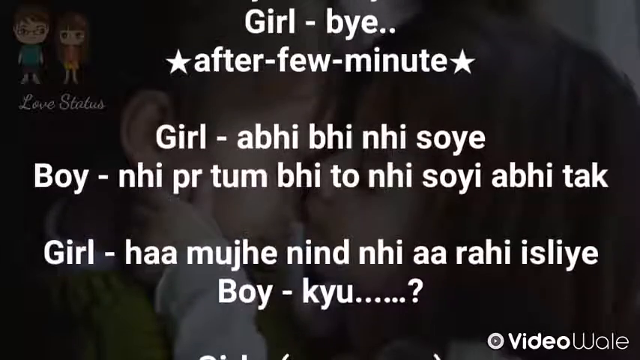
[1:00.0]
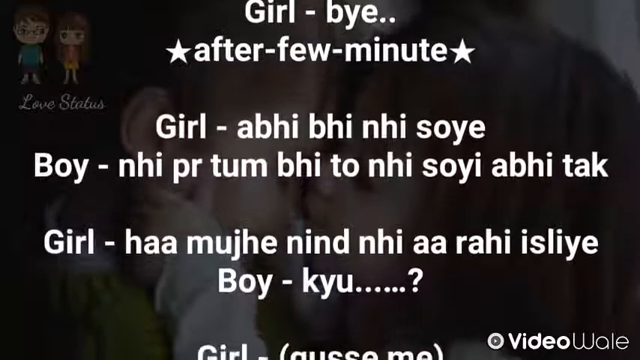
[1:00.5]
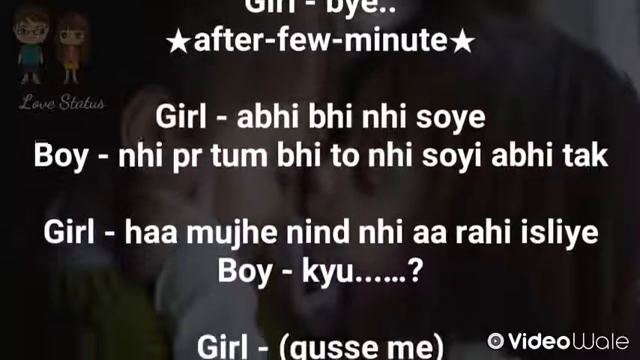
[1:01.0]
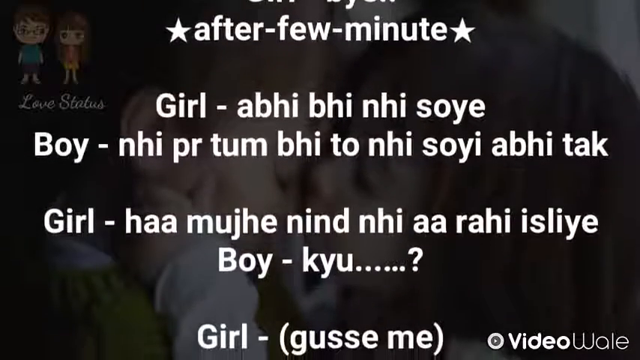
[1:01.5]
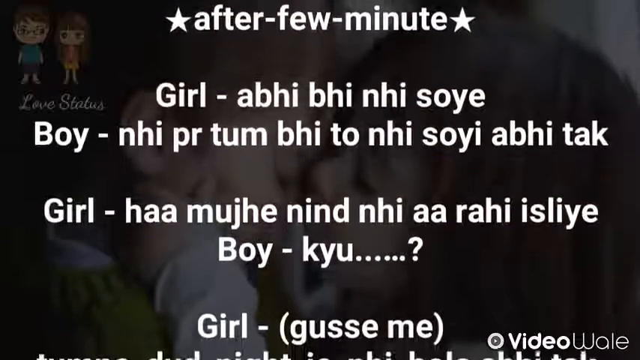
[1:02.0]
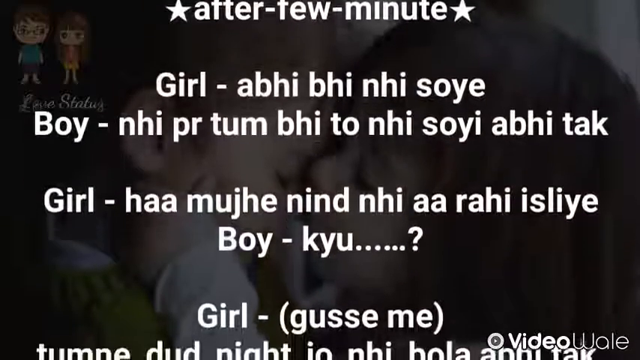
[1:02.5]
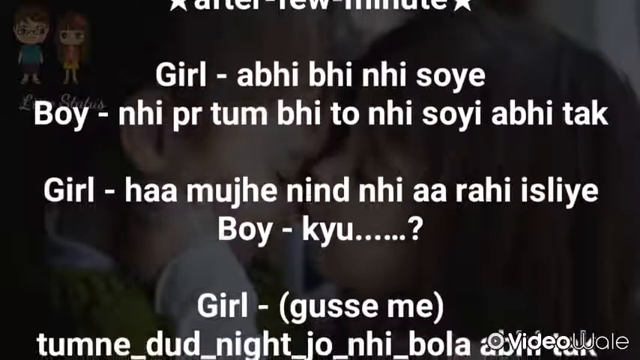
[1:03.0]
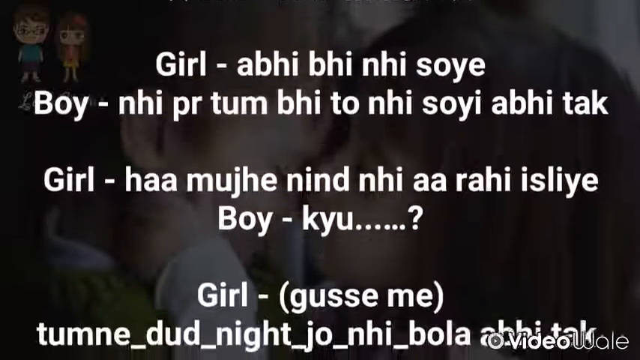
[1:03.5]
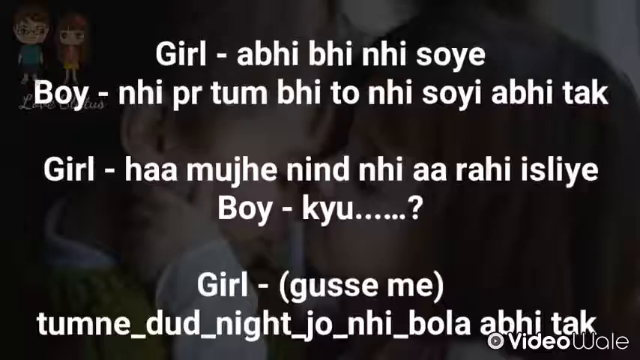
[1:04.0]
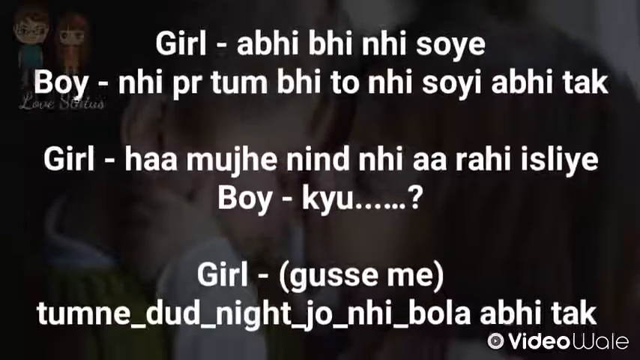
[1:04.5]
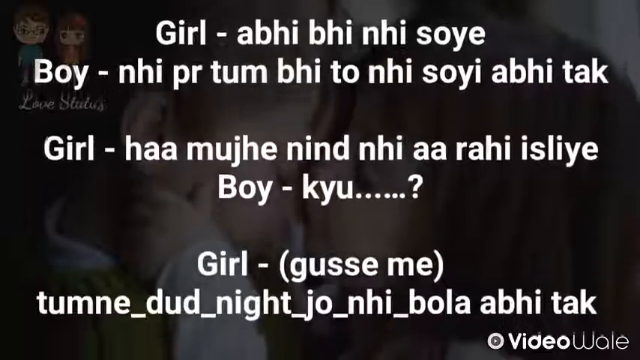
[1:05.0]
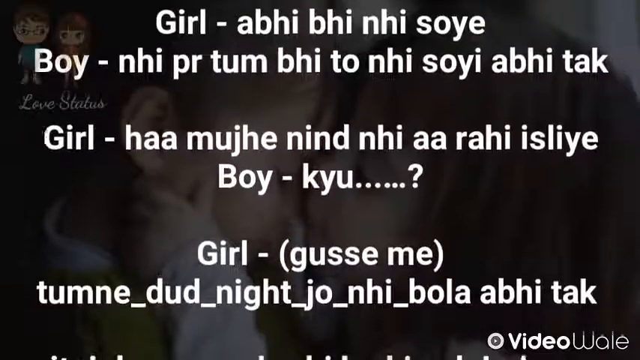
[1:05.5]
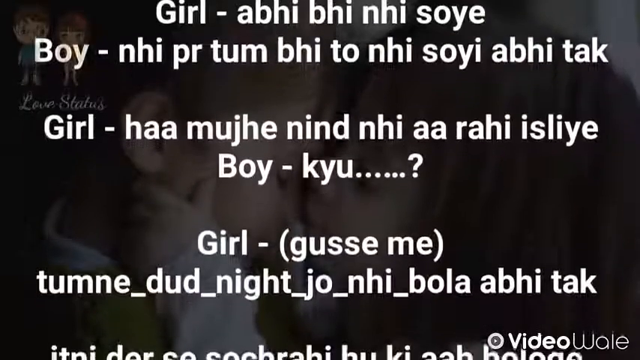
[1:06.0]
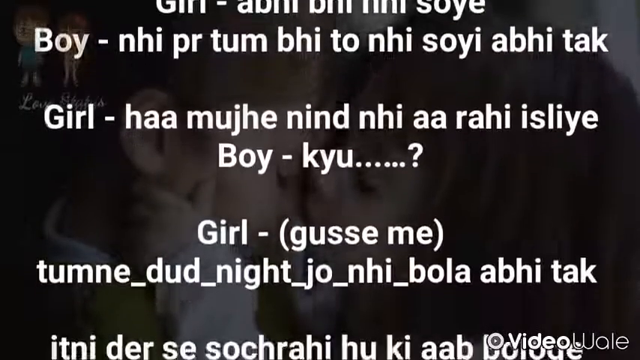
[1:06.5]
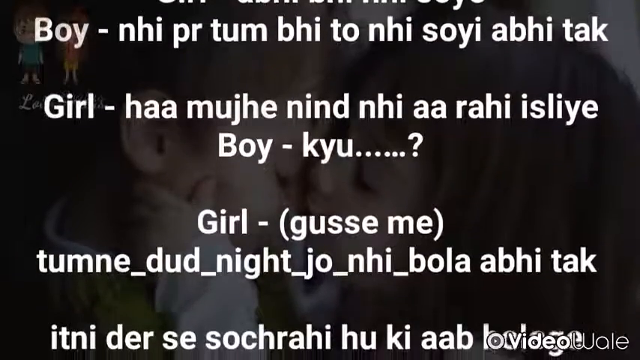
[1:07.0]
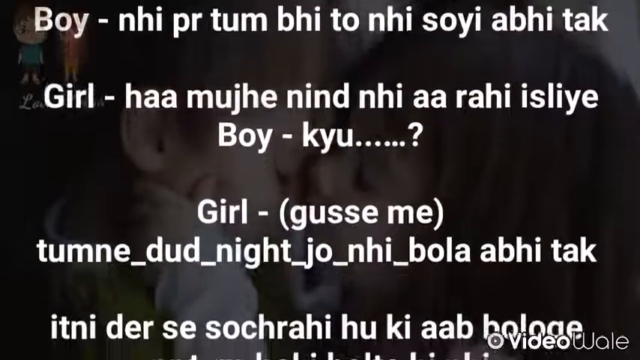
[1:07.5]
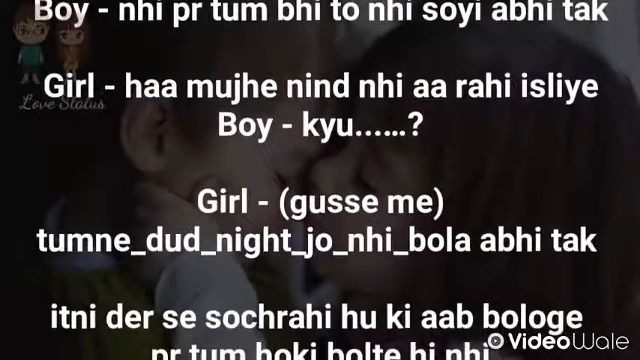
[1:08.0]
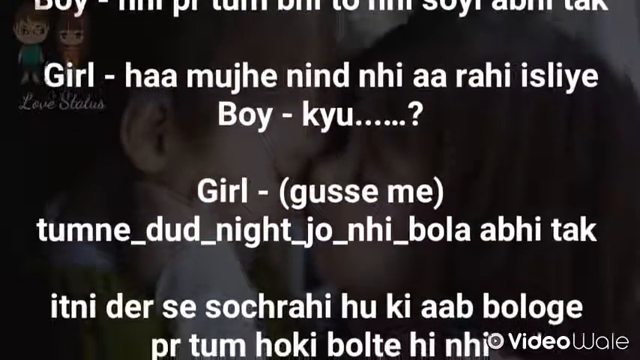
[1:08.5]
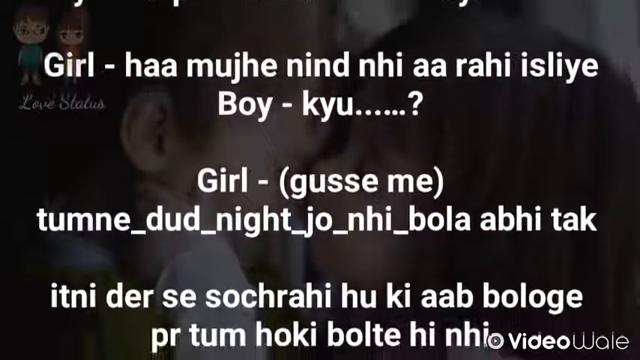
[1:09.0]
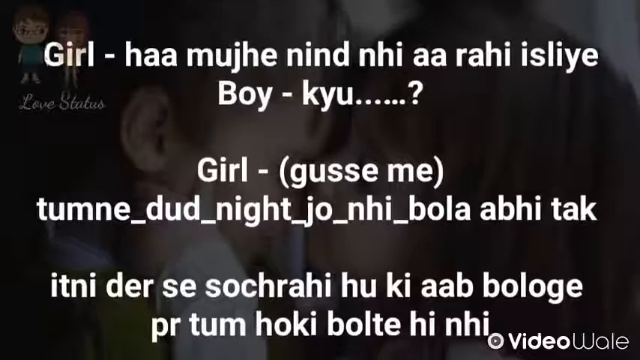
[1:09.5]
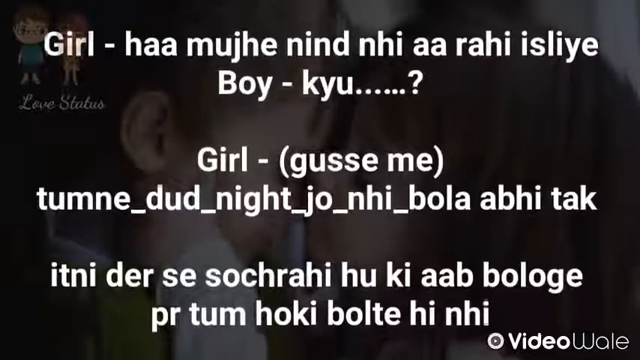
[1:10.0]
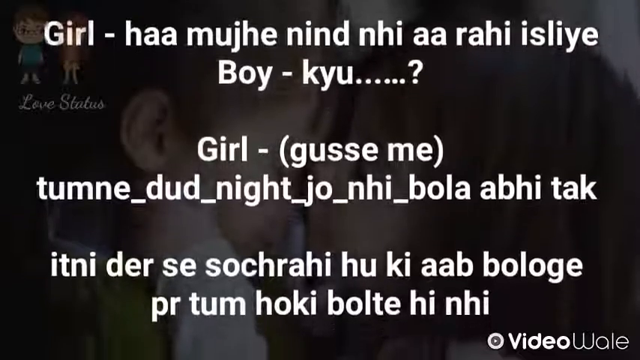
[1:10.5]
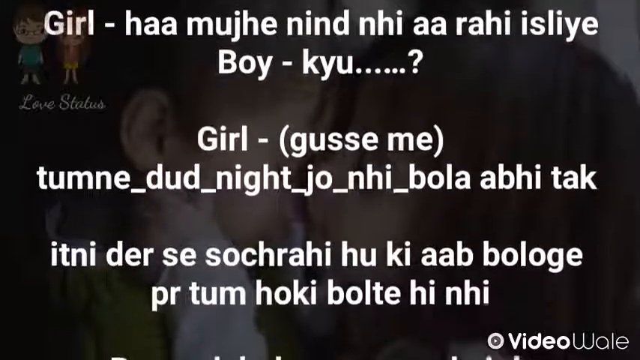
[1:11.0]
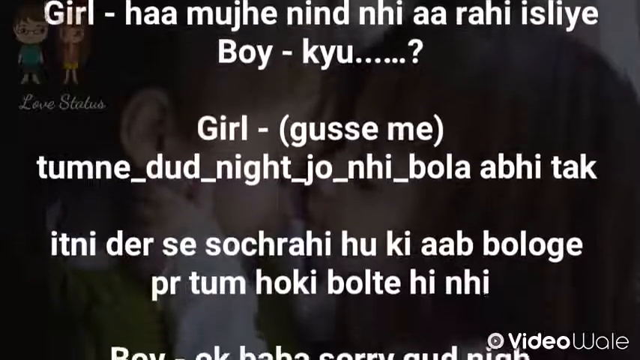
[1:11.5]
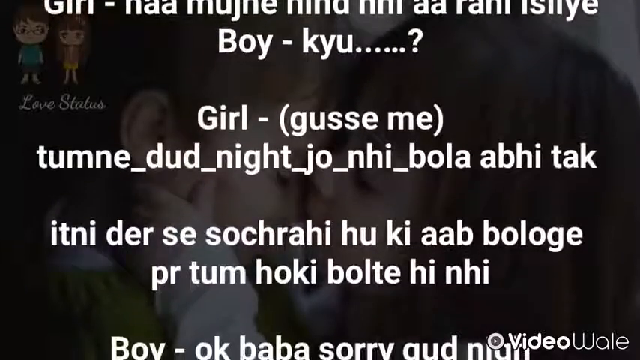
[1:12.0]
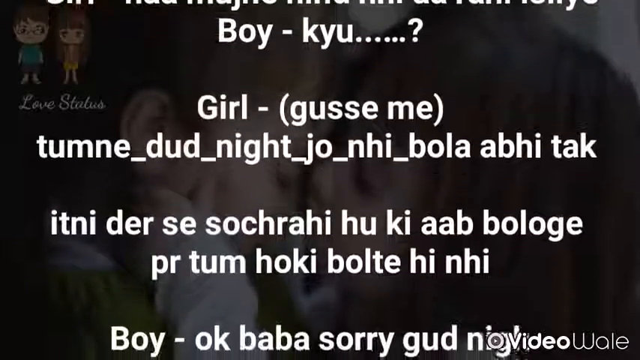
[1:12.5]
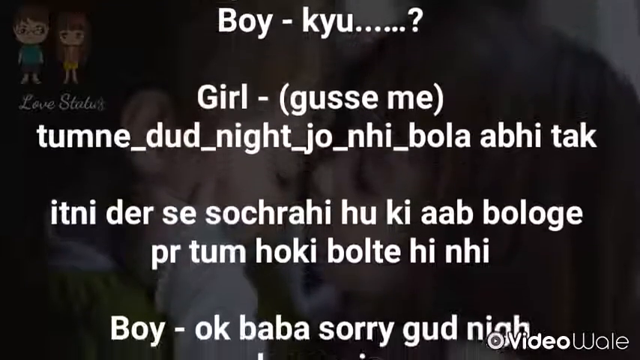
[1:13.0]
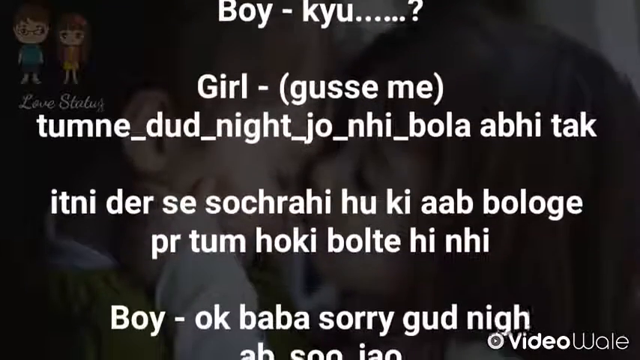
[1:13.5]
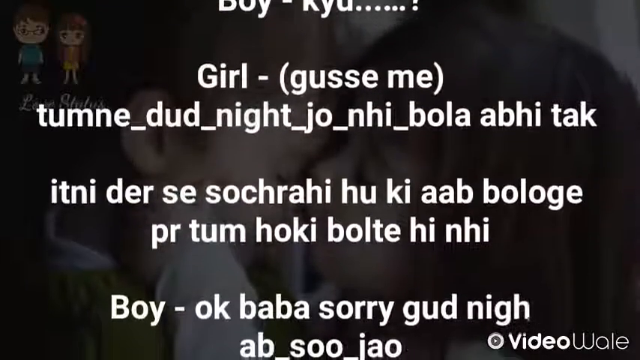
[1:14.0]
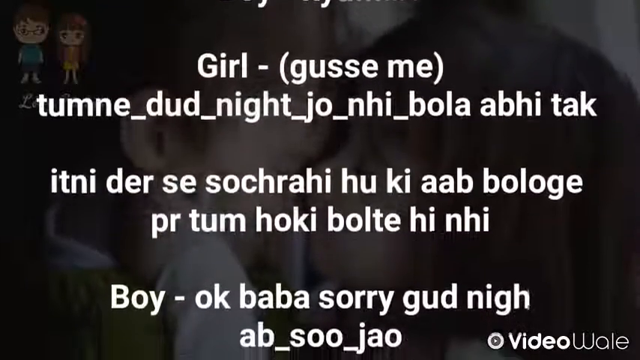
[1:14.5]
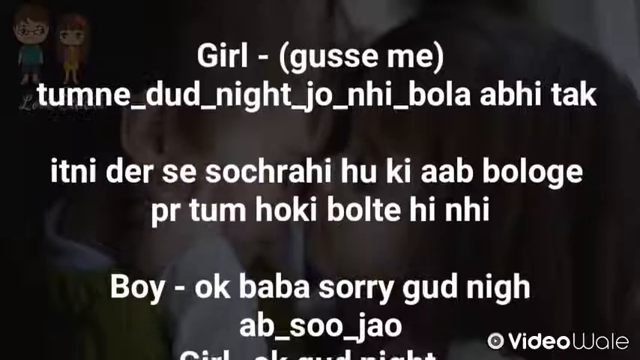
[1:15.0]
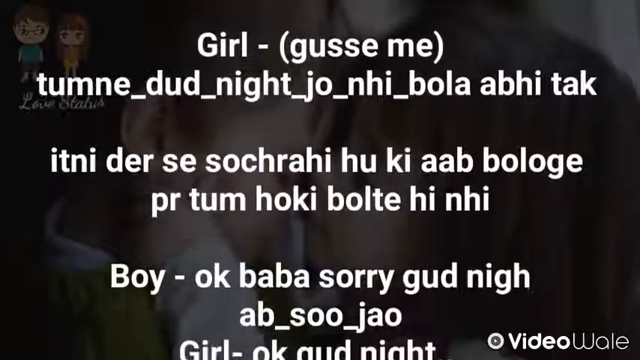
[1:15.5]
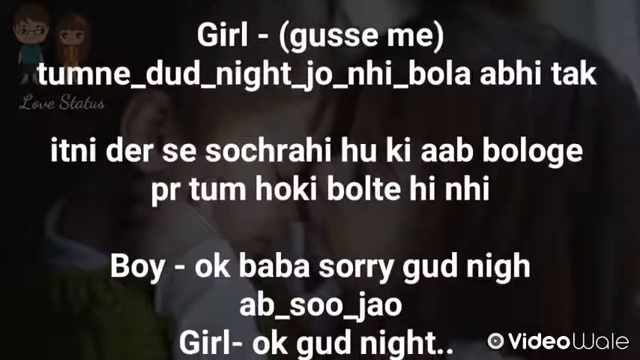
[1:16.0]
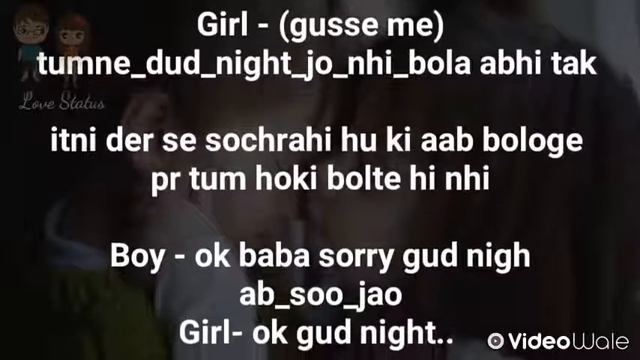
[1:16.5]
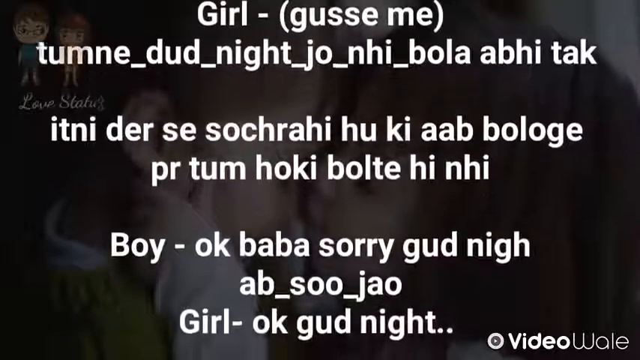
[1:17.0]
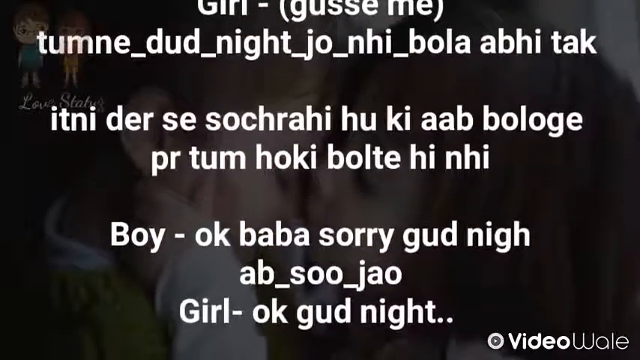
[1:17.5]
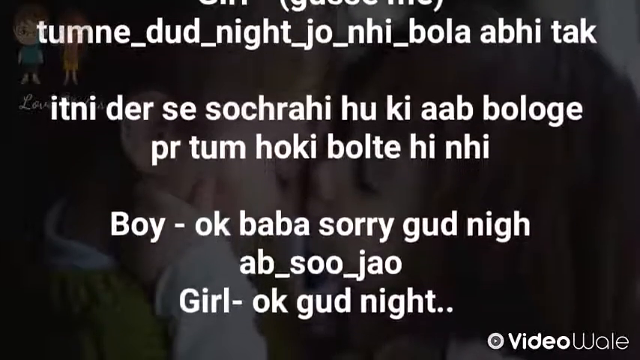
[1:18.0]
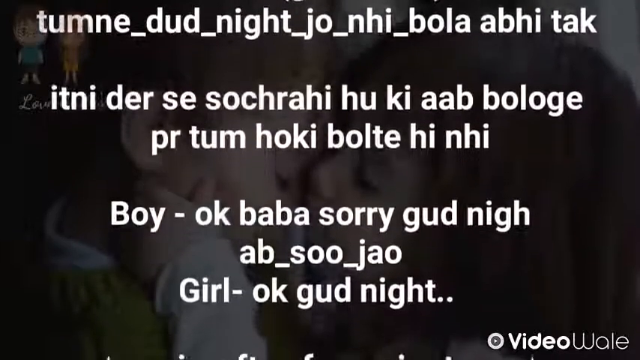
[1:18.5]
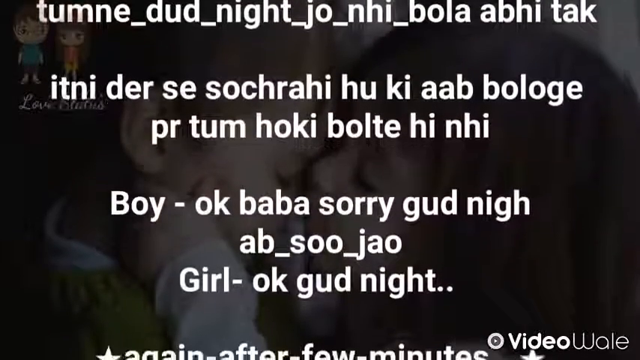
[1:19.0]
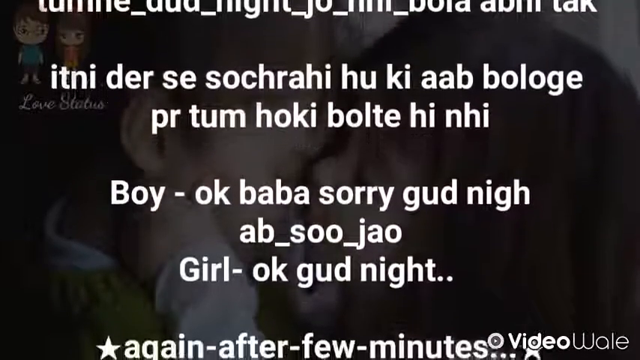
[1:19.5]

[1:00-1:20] The background image remains static: a young girl on the right and a young boy on the left. Only the left side of the girl's face is visible; she has dark brown hair and white skin, and her left hand is on the side of the boy's face. The boy also has white skin and short brown hair, and the right side of his face is visible. Both children have their eyes closed and appear to be sleeping. In the top left is the same cartoon drawing of the boy and the girl. The drawn boy has white skin, glasses, a green-bluish shirt and dark blue shorts; the drawn girl has similar white skin, an orange-ish shirt and something like a yellow dress. White text in the middle, apparently subtitles, slowly moves up toward the top of the screen. The subtitles are white and bold and appear to be in a foreign language.